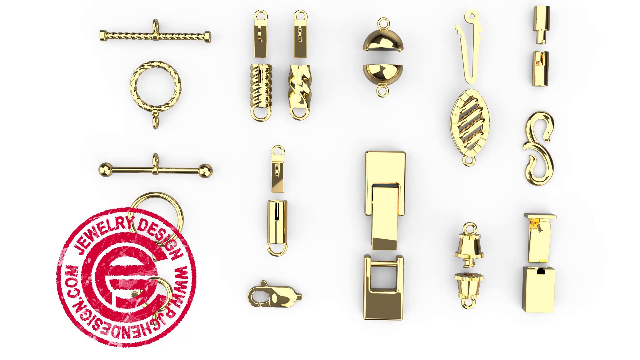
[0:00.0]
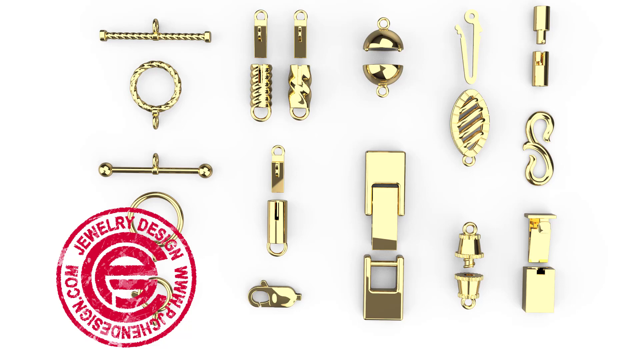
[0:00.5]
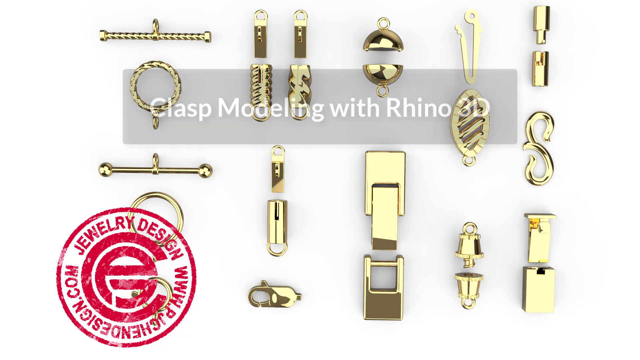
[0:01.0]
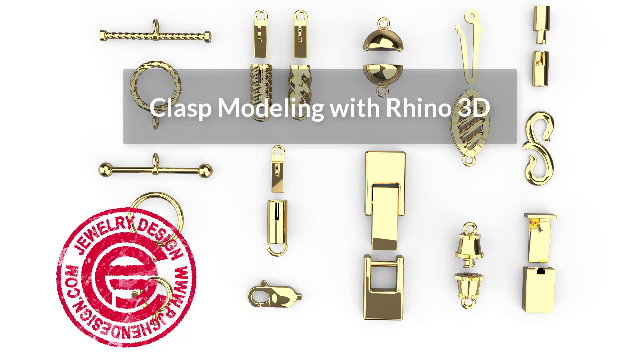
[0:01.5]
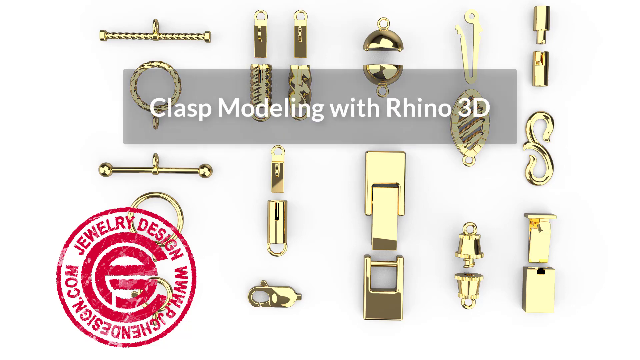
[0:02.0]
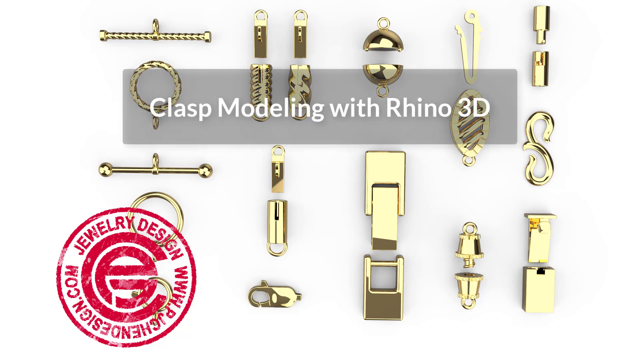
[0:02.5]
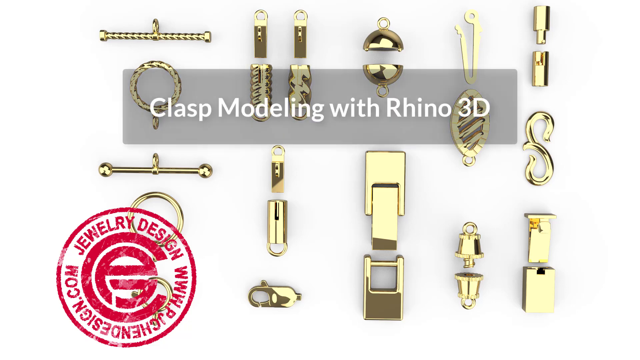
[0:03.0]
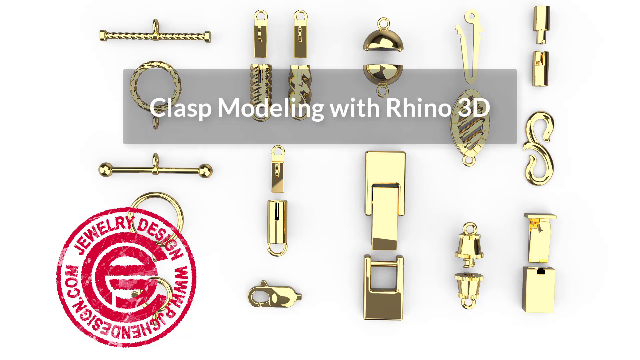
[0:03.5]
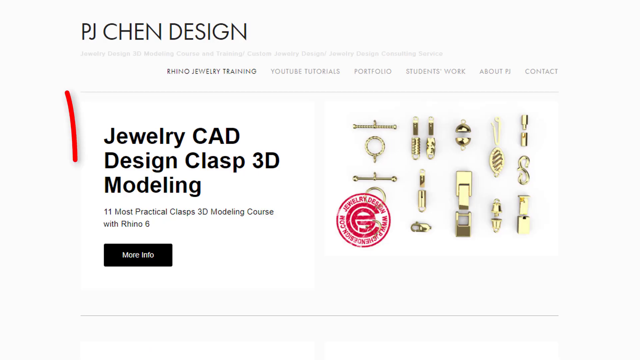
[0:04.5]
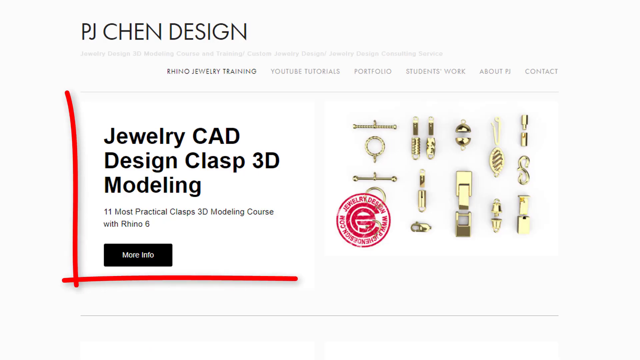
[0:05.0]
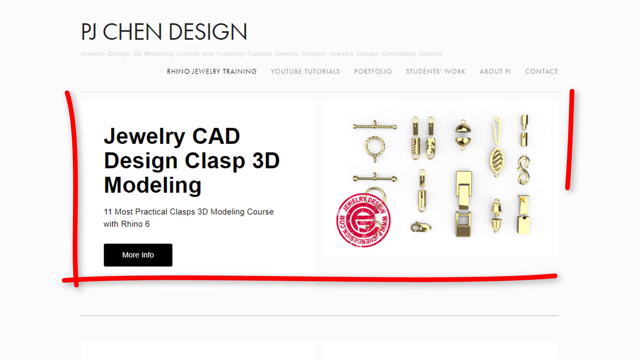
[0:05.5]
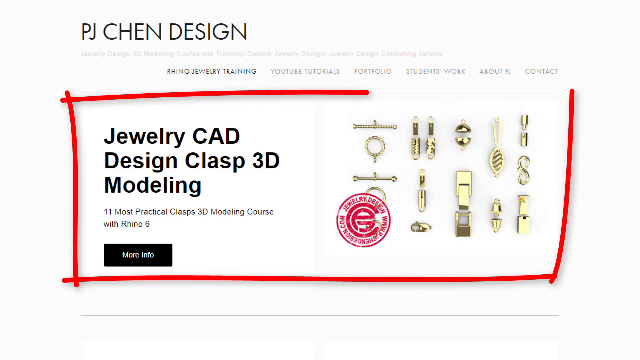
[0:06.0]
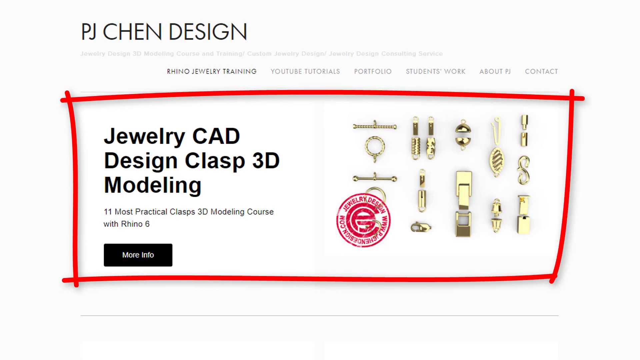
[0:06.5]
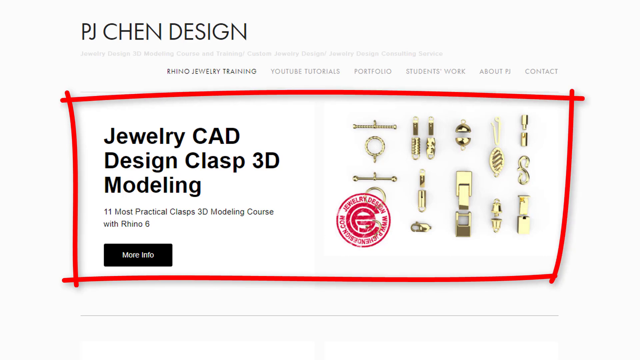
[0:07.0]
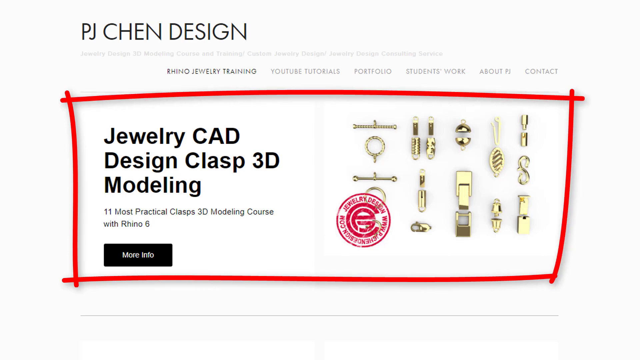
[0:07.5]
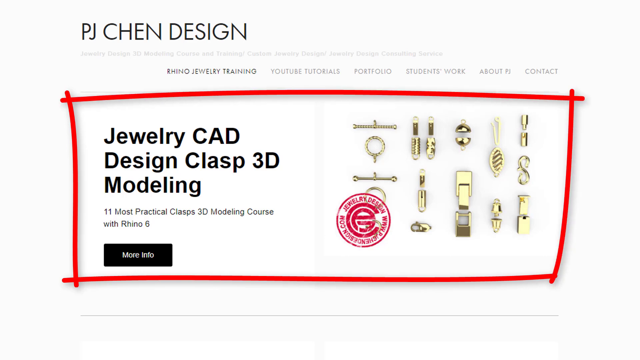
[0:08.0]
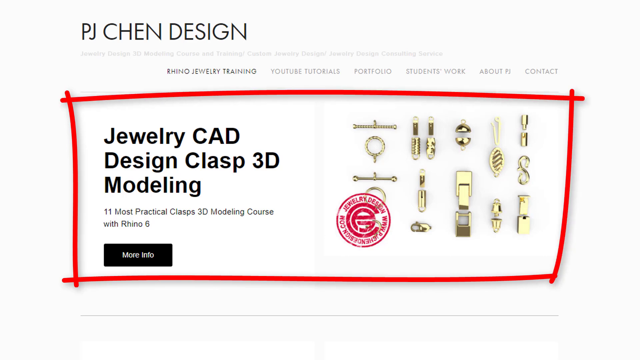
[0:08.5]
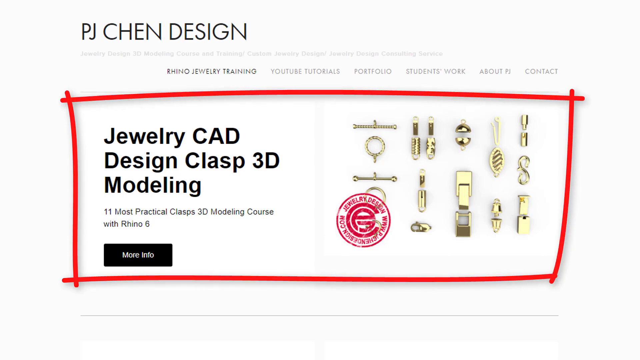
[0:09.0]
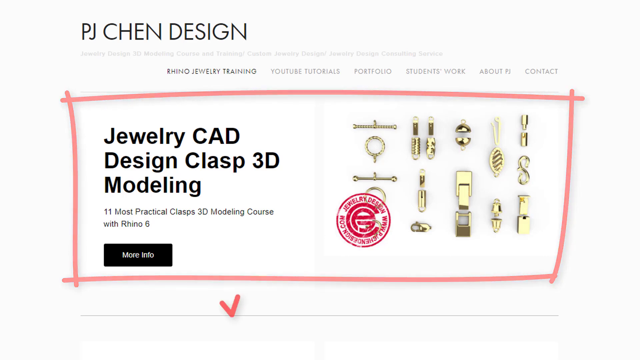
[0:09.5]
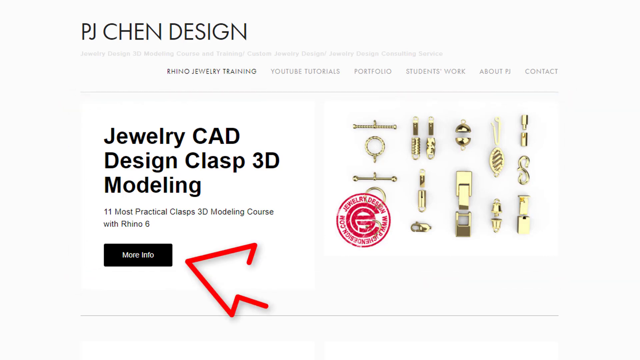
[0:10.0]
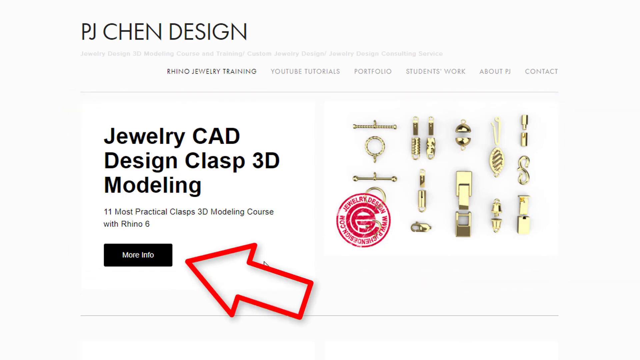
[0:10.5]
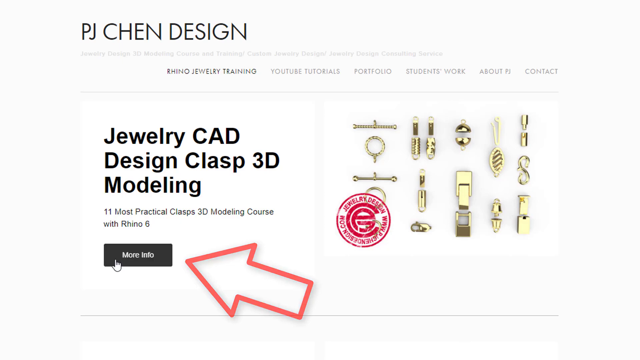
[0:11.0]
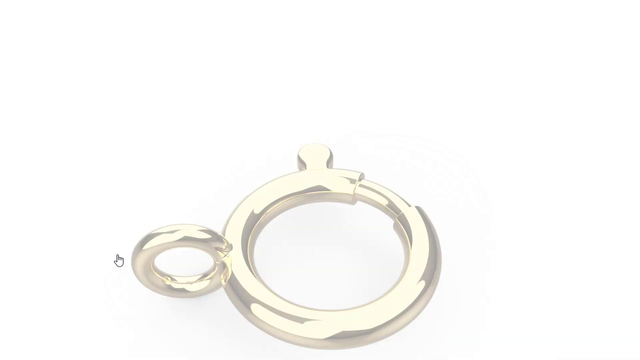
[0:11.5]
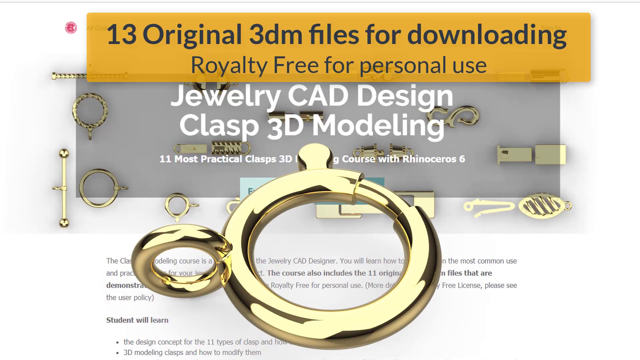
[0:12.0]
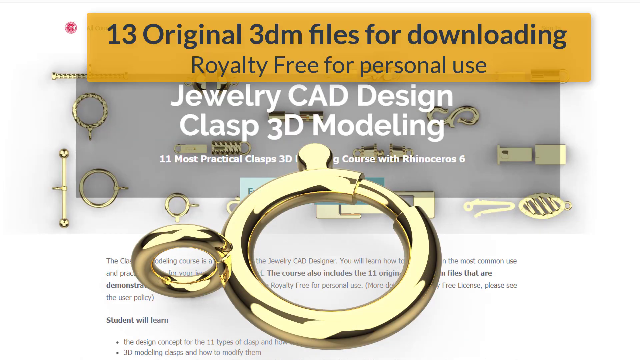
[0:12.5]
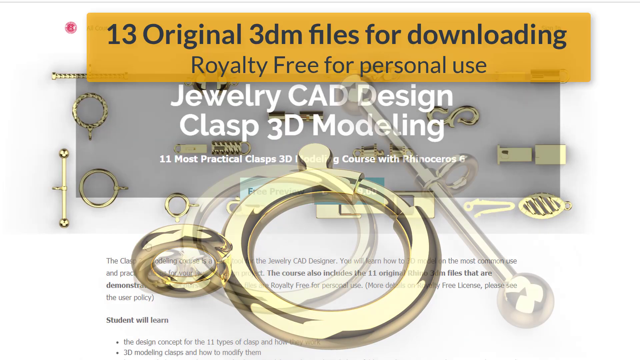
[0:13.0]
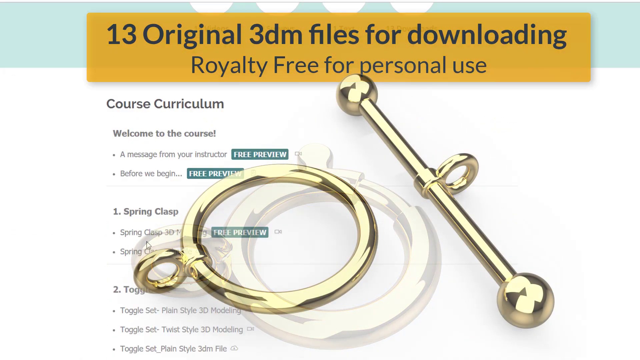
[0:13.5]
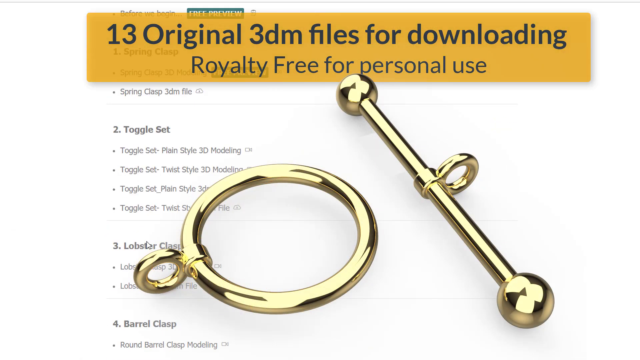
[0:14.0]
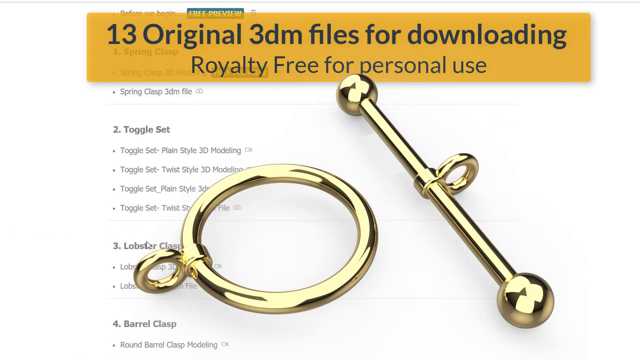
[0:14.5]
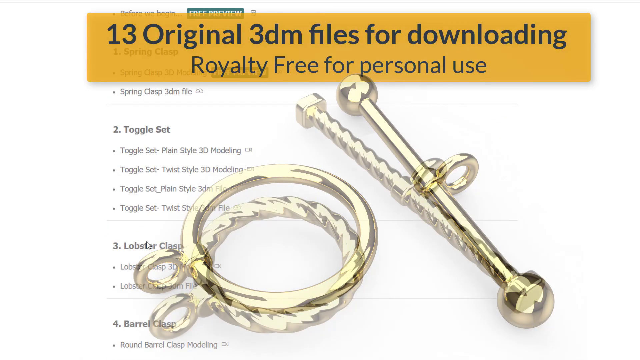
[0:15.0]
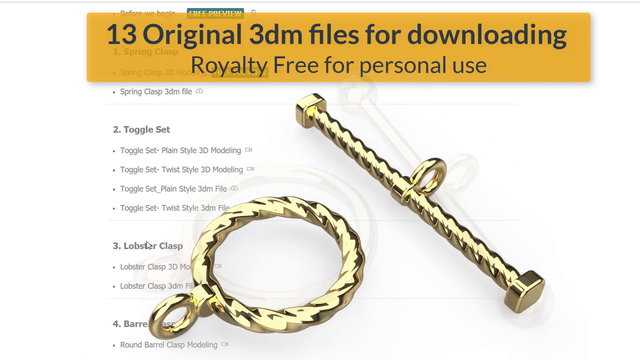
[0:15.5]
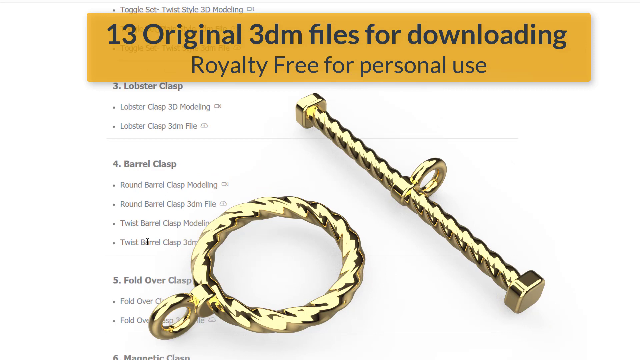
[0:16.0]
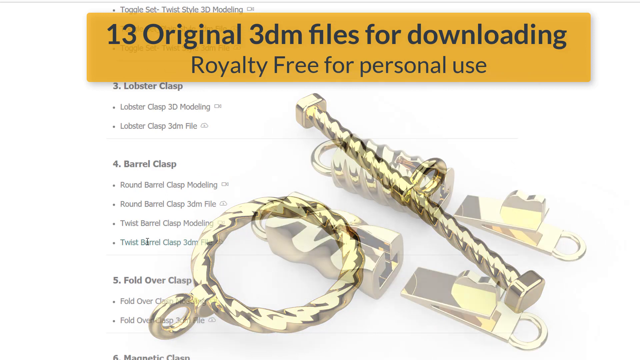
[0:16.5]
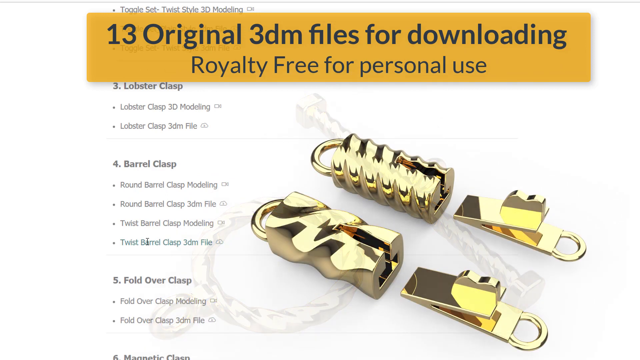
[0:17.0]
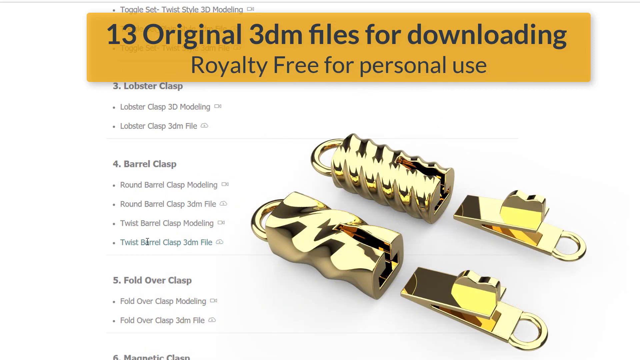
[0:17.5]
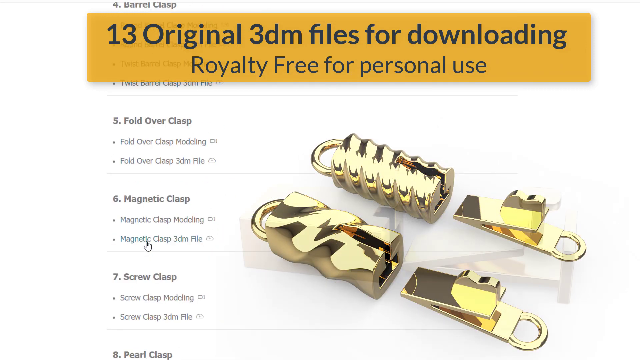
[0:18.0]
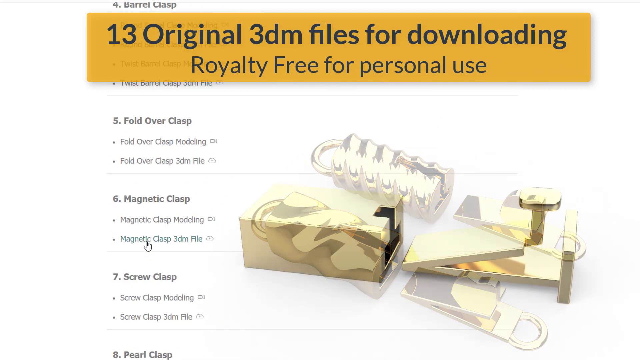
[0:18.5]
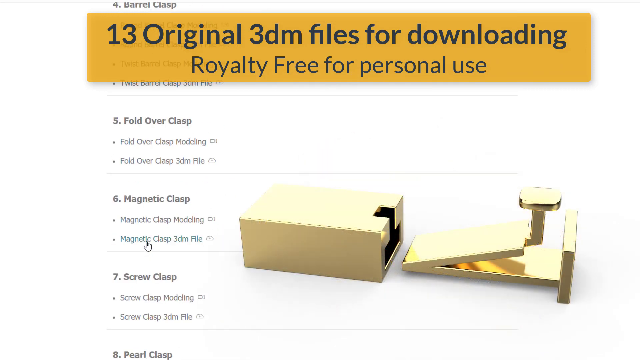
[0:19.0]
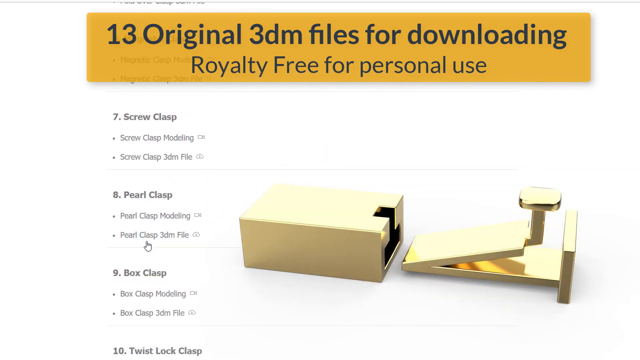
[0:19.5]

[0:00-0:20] A screen reads "Jewelry CAD Design Clasp 3D Modeling, 11 Most Practical Clasps 3D Modeling Course with Rhino 6," with a More Info button below it; the website is pjchindesign. A red rectangle is drawn onto the middle of the screen, then a red arrow points to the More Info button, and the mouse cursor clicks it, leading to the next screen, which reads "13 original 3DM files for downloading royalty-free for personal use." Brass or bronze clasps appear on the screen while, in the background, someone scrolls through the website. The list of file titles begins with "course curriculum" and "welcome to the course," followed by toggle set, spring clasp, lobster clasp, barrel clasp, fold over clasp, box clasp and pearl clasp, the files available to download. The video later shows the different clasps all in one setting at the very end.